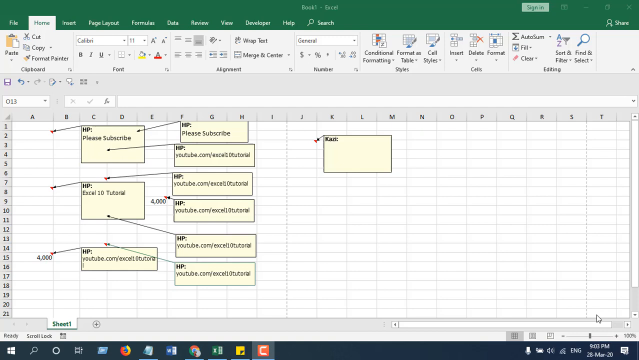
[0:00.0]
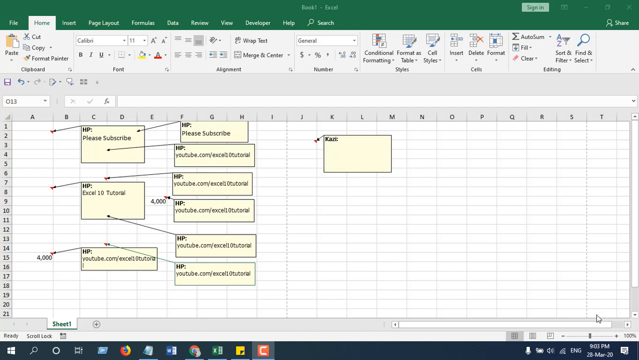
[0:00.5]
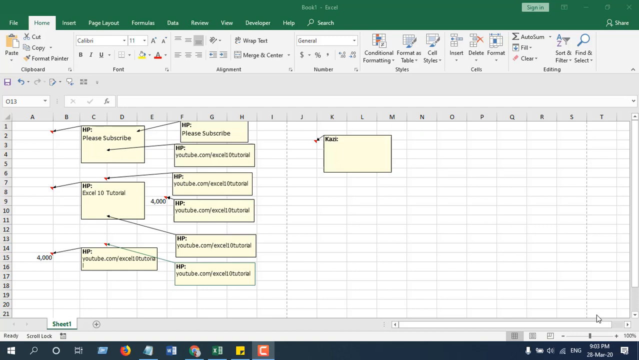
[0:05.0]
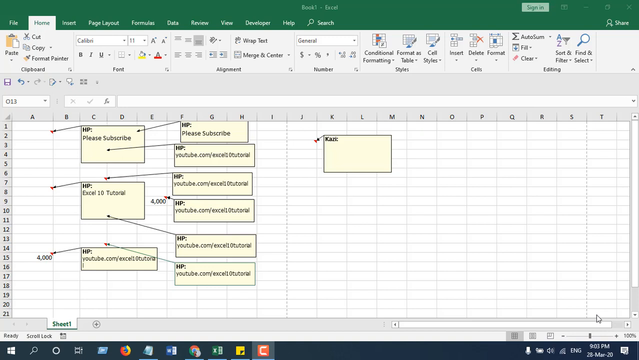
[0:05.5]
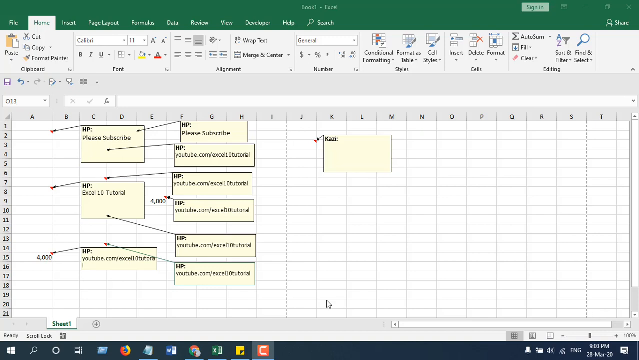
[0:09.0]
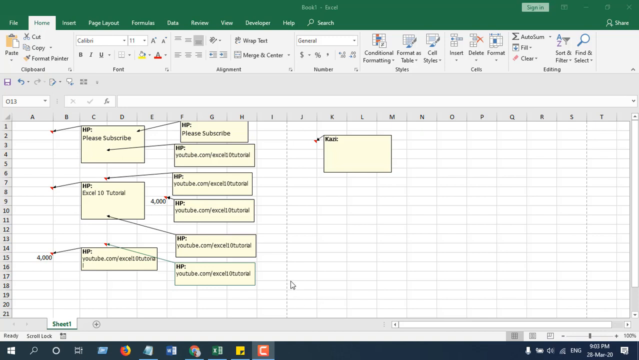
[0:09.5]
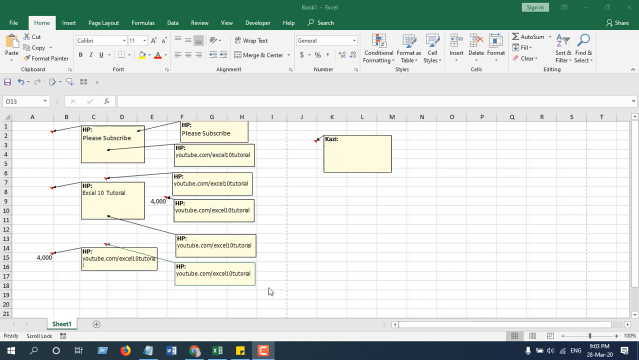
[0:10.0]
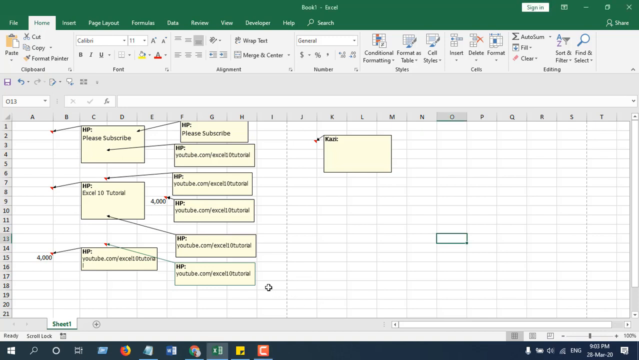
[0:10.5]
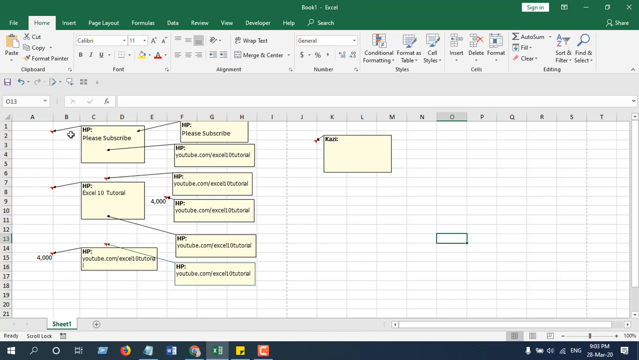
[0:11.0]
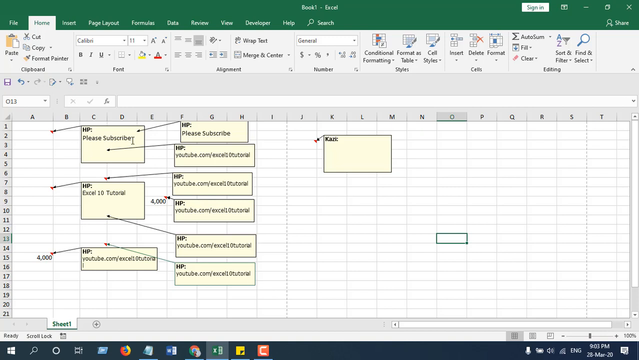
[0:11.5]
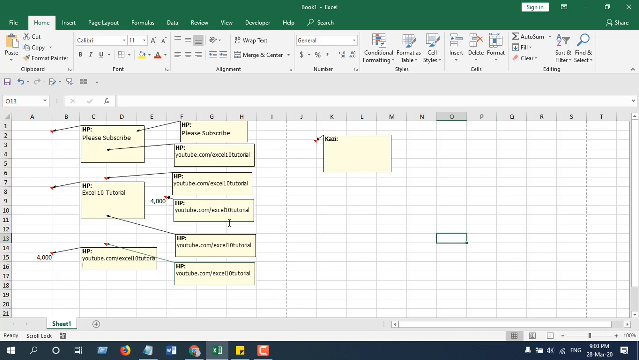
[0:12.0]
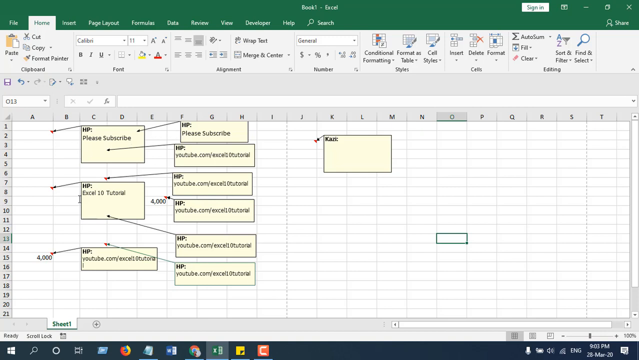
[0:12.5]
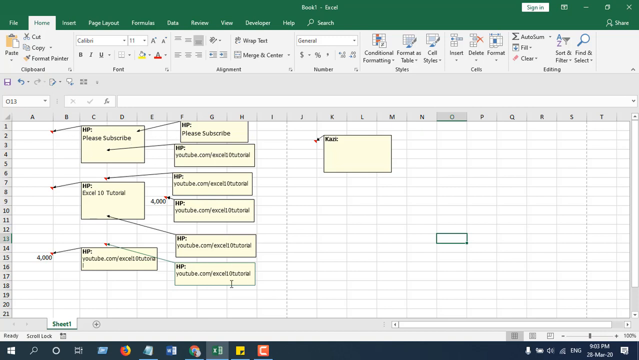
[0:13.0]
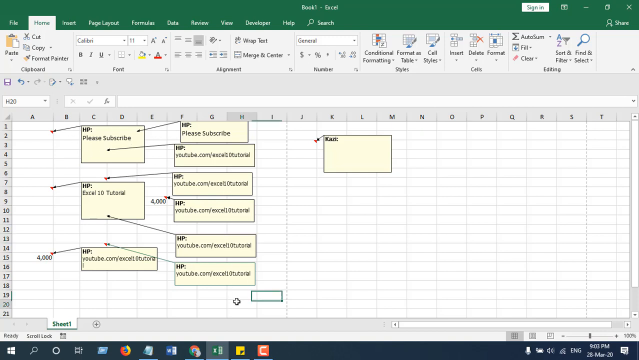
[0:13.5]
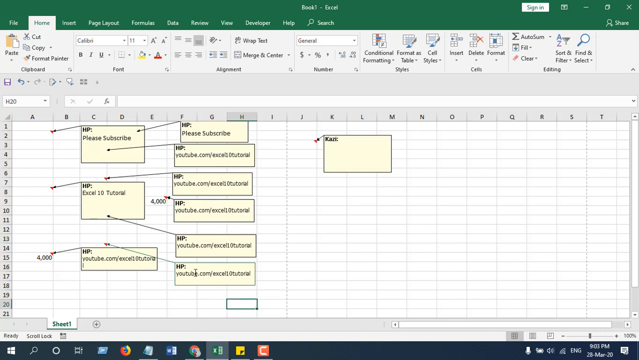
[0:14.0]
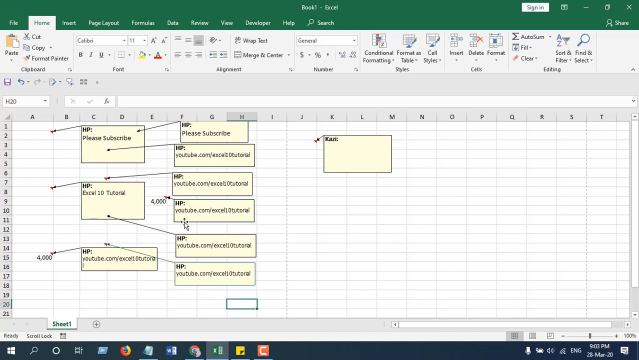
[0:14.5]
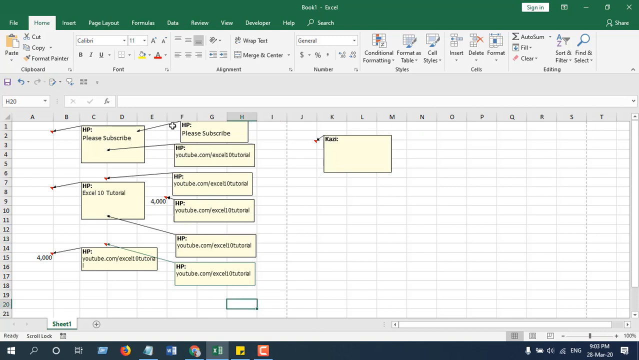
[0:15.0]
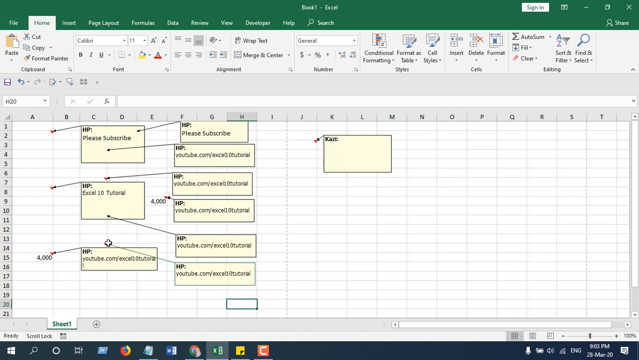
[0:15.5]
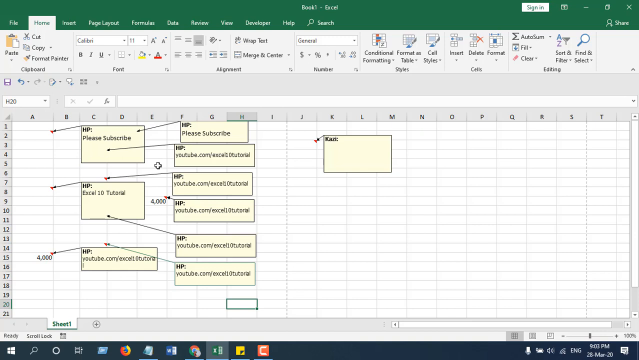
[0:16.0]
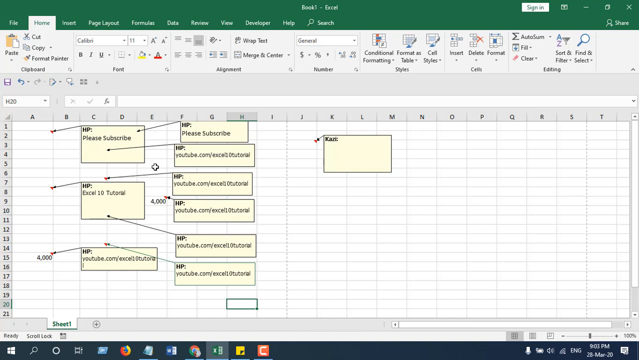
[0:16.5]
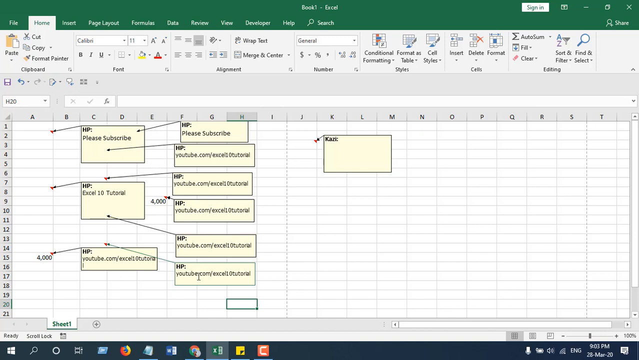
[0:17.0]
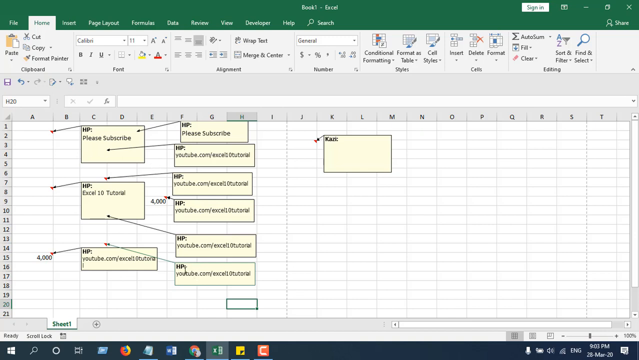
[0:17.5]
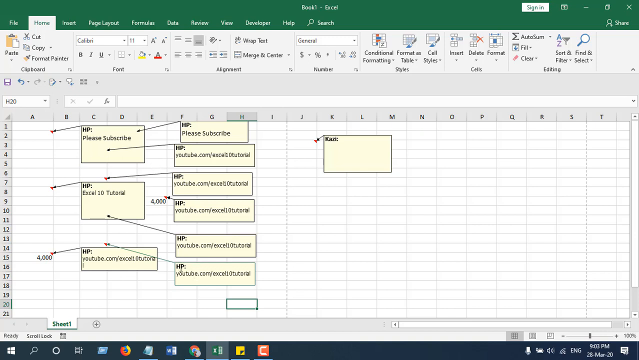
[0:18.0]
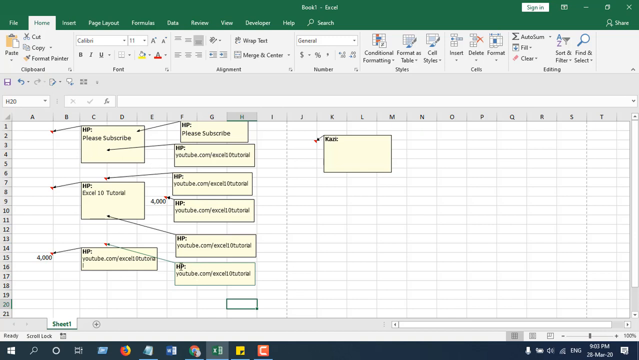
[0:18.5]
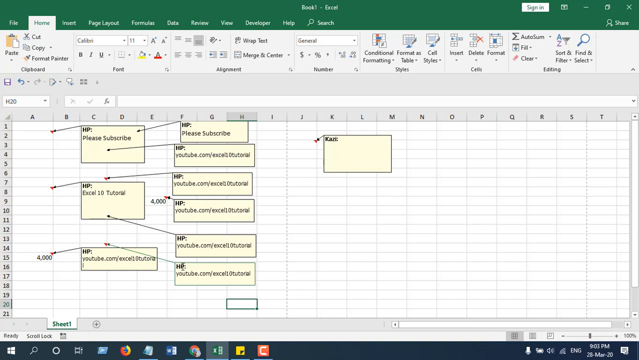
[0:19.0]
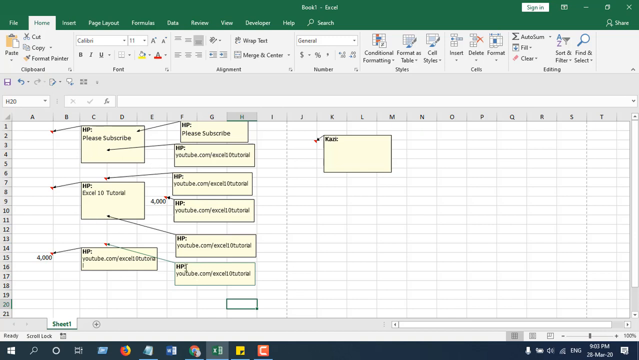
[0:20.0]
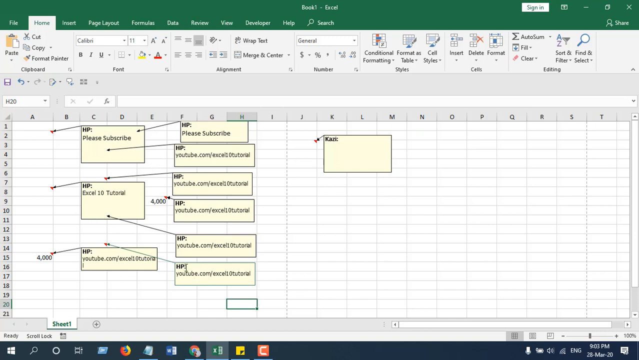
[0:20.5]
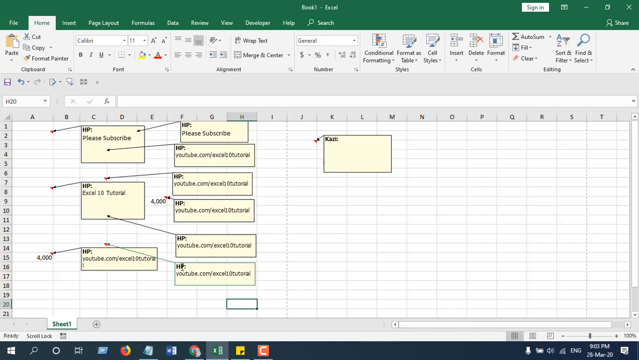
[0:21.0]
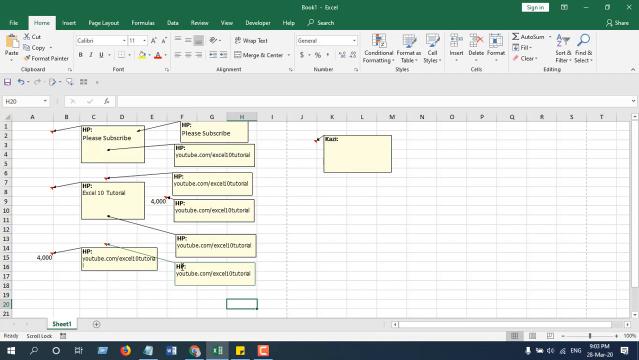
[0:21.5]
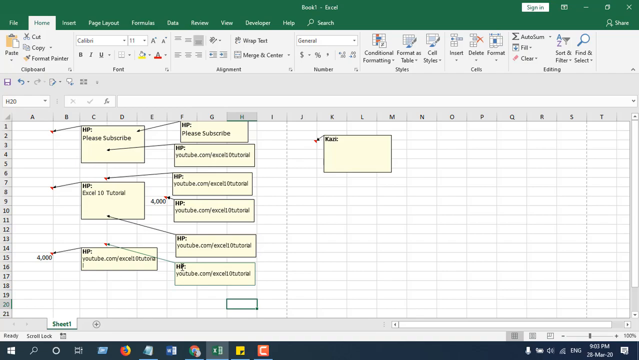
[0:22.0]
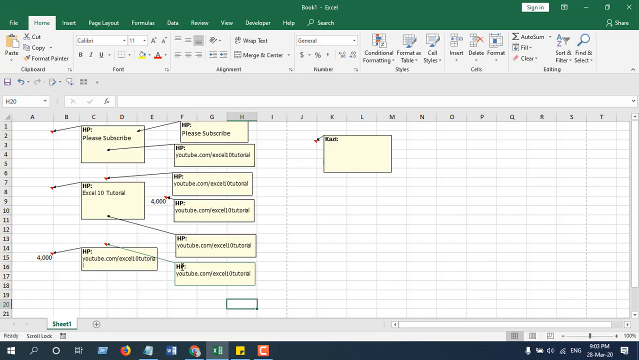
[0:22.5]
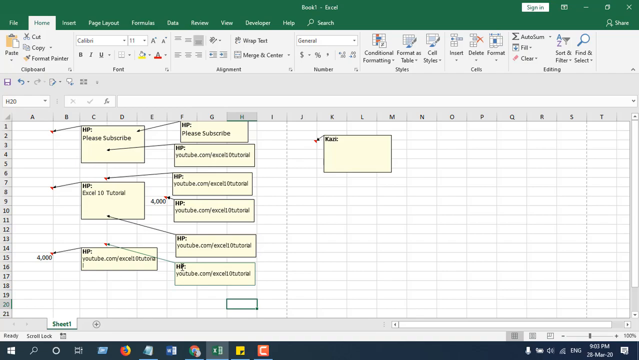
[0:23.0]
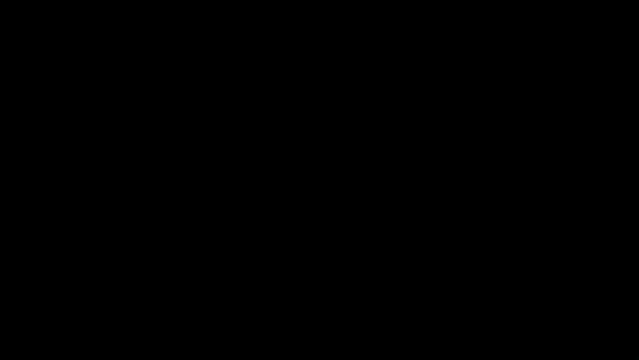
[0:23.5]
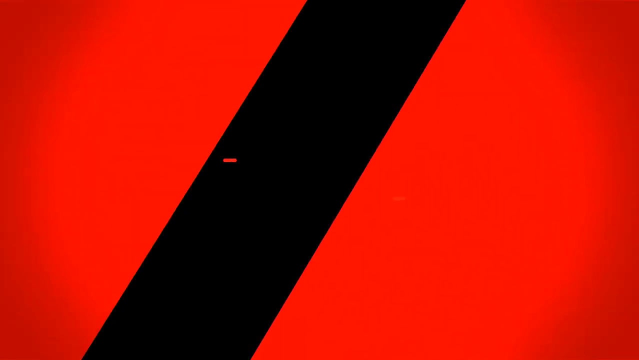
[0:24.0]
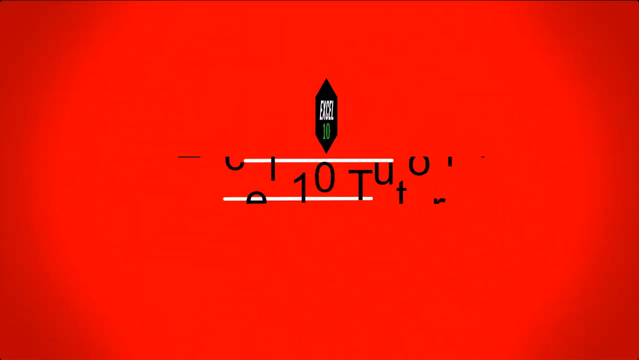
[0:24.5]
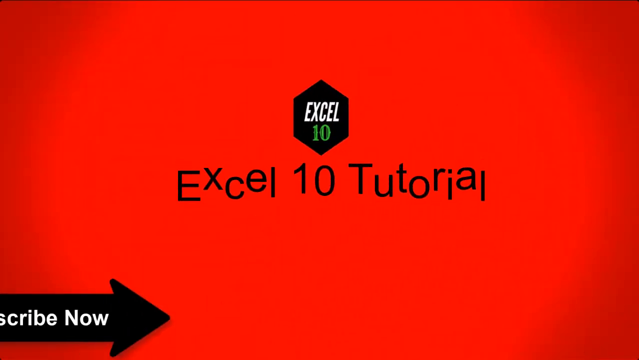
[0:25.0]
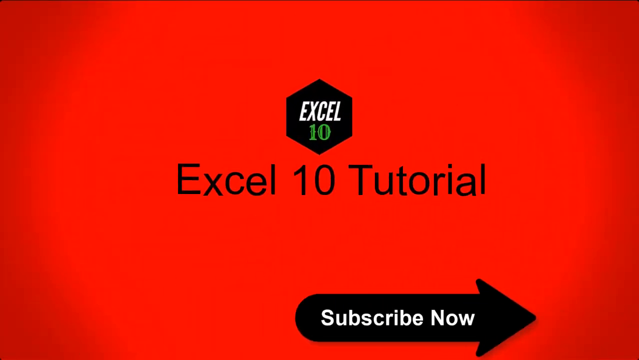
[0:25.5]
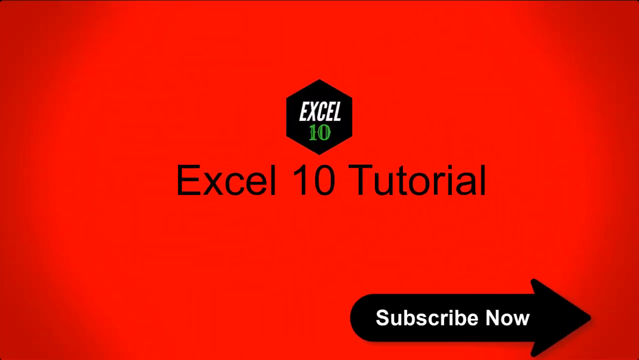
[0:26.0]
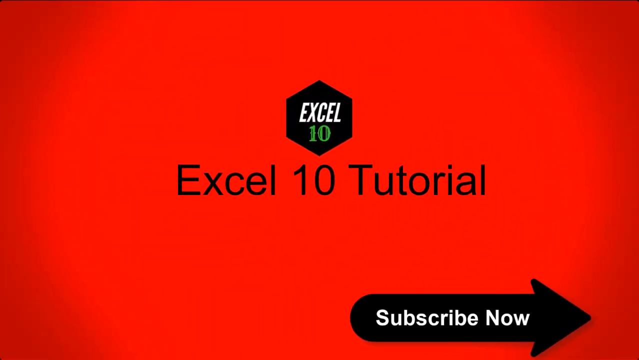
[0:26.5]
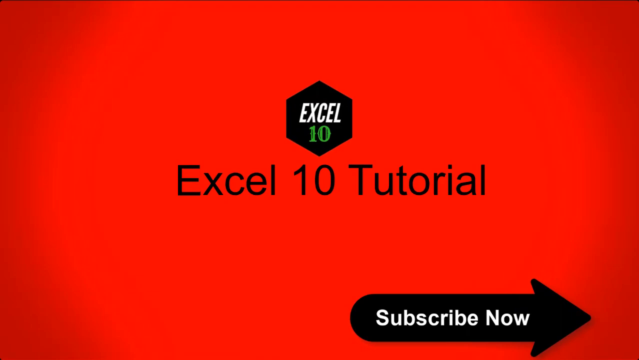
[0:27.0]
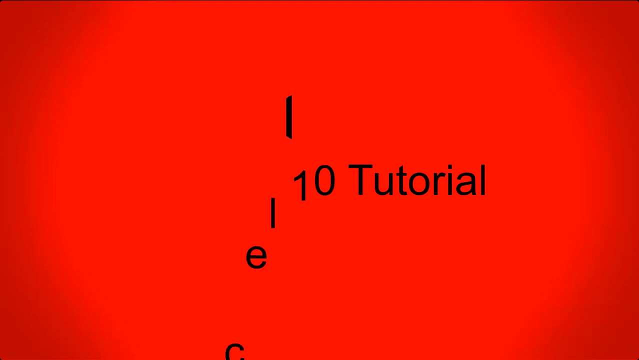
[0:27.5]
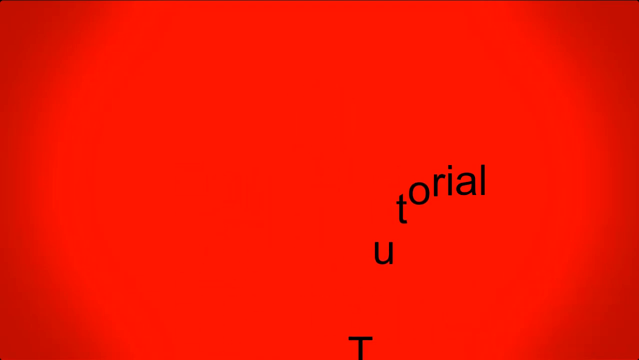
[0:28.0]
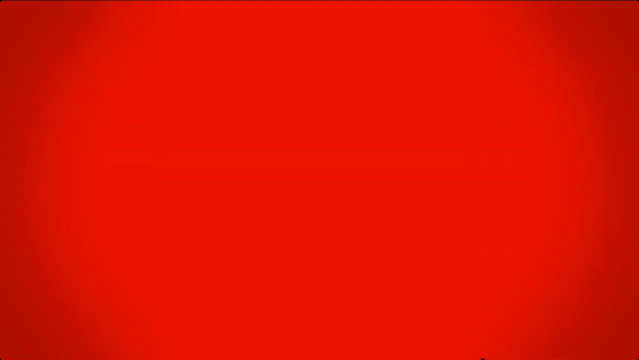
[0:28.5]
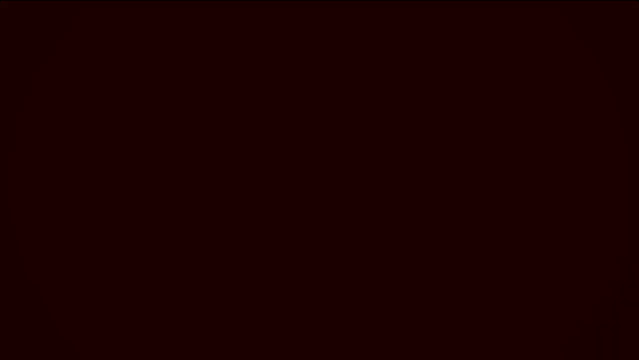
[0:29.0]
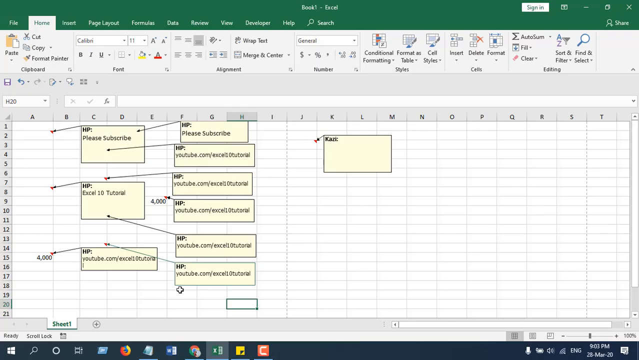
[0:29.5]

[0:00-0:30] An Excel form shows links leading to further links: around three links, each leading to an extra two links. On the right is a separate element, apparently from Kazi. The video quality is very low. The user hovers the mouse over each link, seemingly to point something out. There are pins pointing to a number, and two of the links point toward 4000. The segment ends with "Excel 10 tutorials. Subscribe now." It appears to be a video tutorial, possibly showing how to use these links and what they are used for. The Windows taskbar shows what appears to be 28th of March 2020 at 9 p.m., along with Wi-Fi, suggesting a laptop.